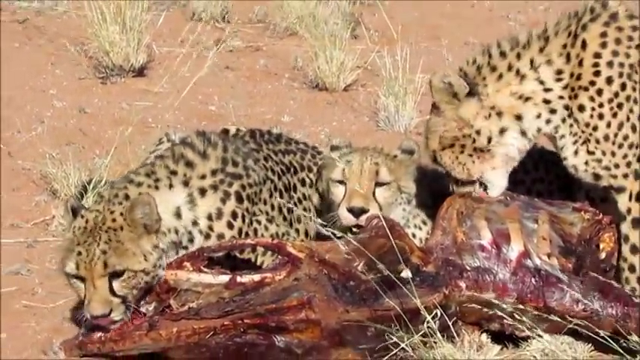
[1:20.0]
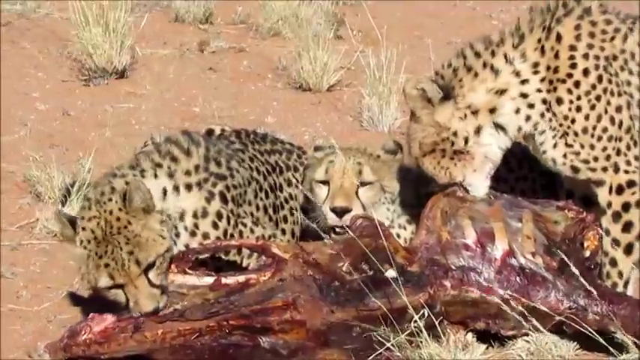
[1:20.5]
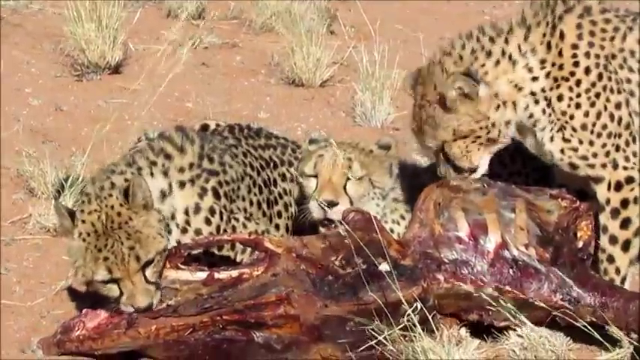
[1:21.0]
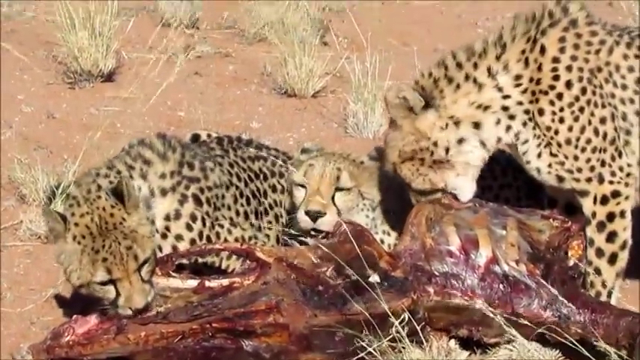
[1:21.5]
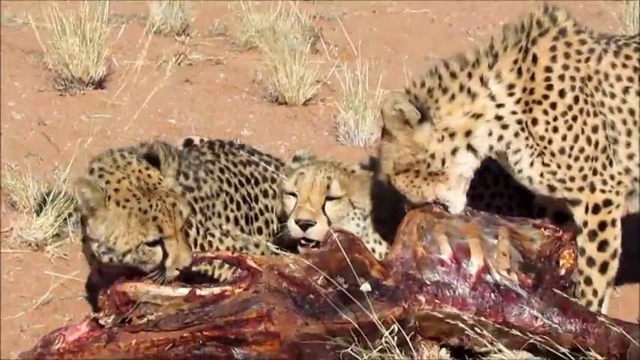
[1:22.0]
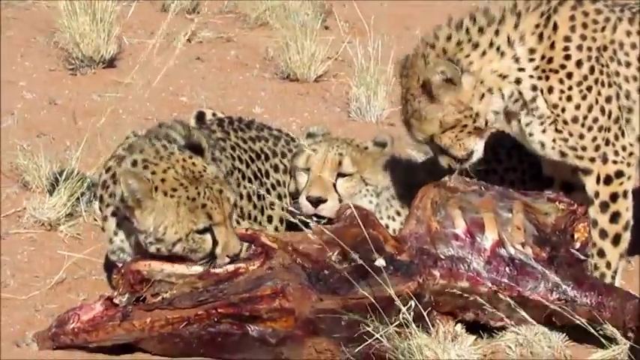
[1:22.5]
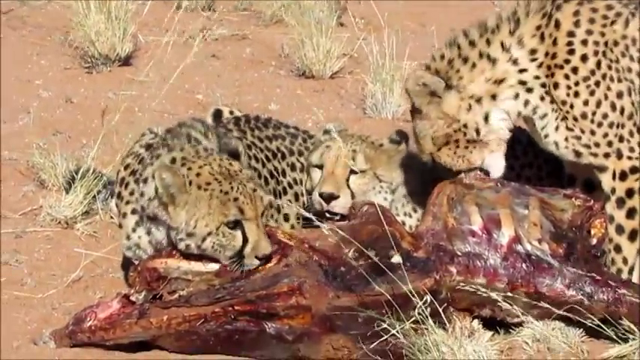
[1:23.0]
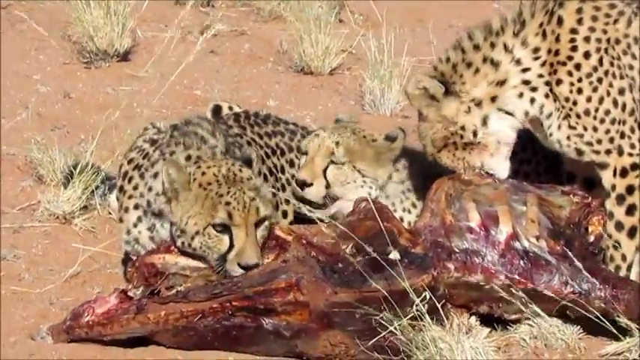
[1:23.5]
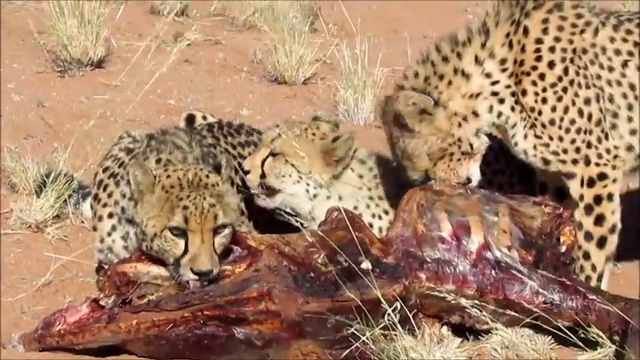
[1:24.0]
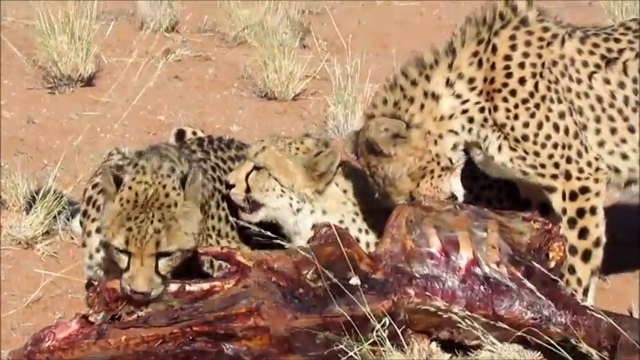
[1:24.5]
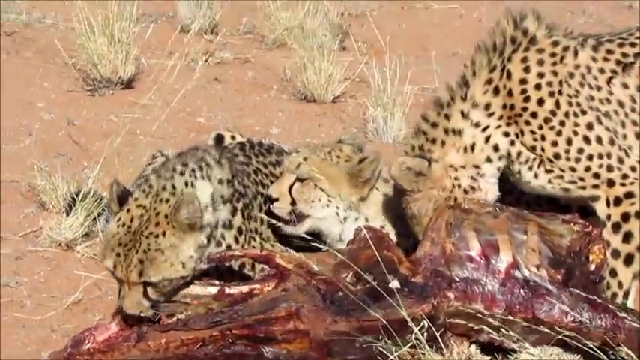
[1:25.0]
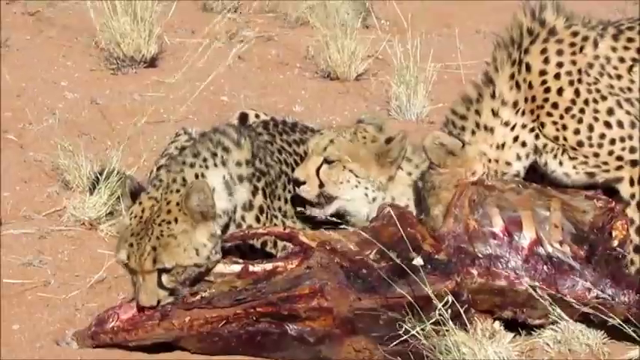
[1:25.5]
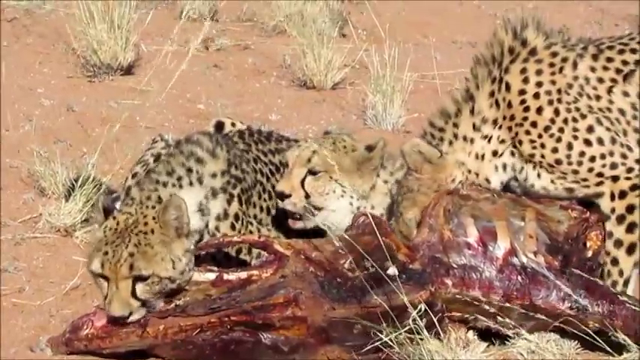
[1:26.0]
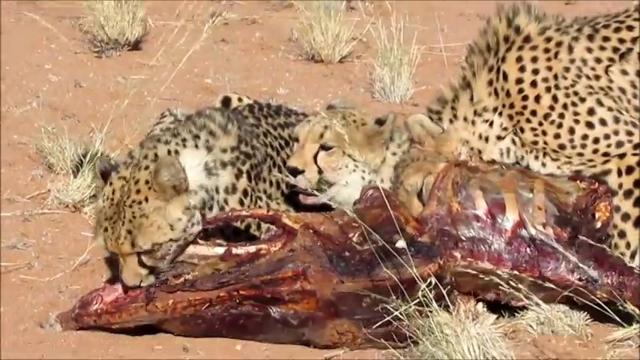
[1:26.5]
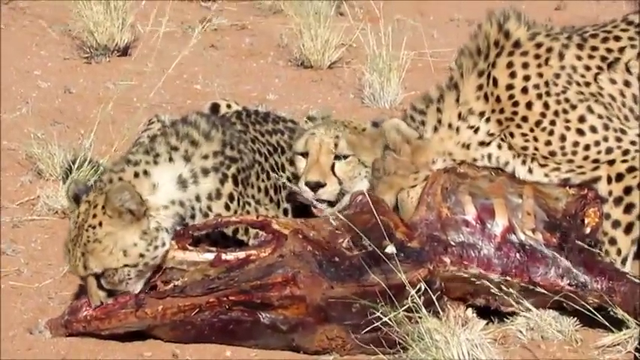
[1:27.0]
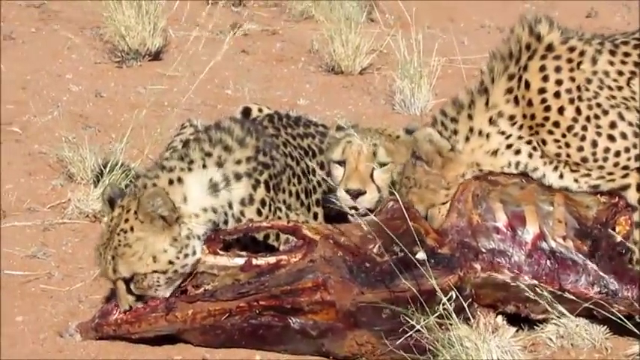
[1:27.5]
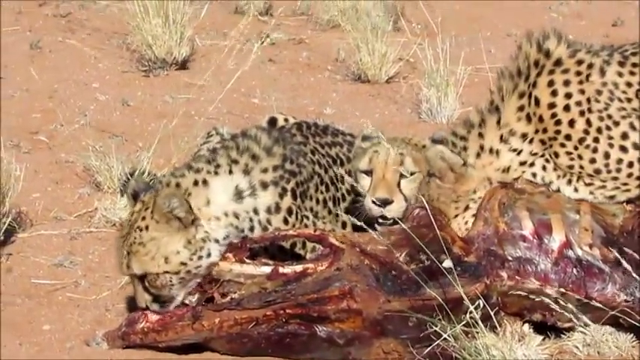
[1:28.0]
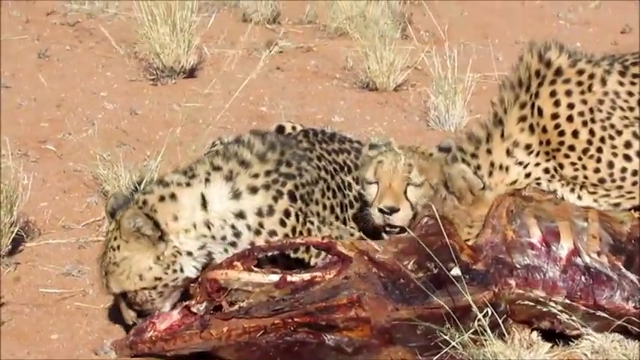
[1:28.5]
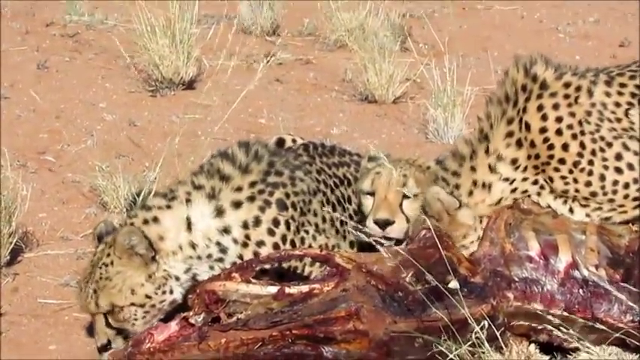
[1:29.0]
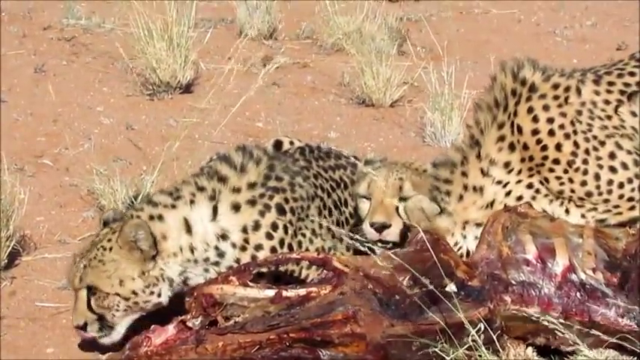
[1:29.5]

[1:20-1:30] The three cheetahs are shown zoomed in, in close-up, so their heads are clearly visible as they eat the desiccated carcass of some sort of animal. Some ribs poke out on the right, and there are a couple of big bones on the left where it looks like some of the meat has already been consumed. The cheetah on the right licks and tears at the flesh, the cheetah on the left seems to be carefully looking for the next part to eat, and the cheetah in the middle is kind of just watching for the most part, engaging every now and then, and seems to have already eaten.